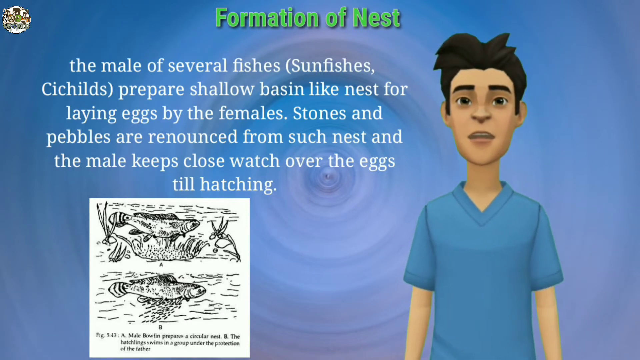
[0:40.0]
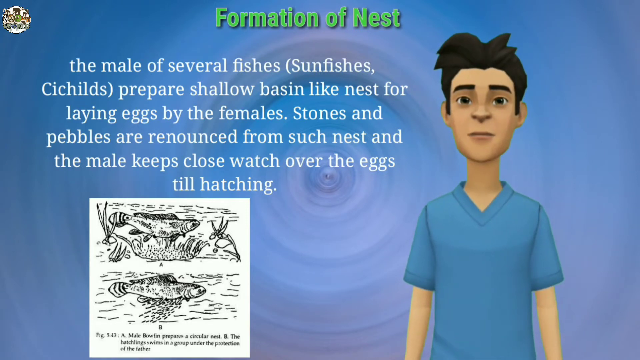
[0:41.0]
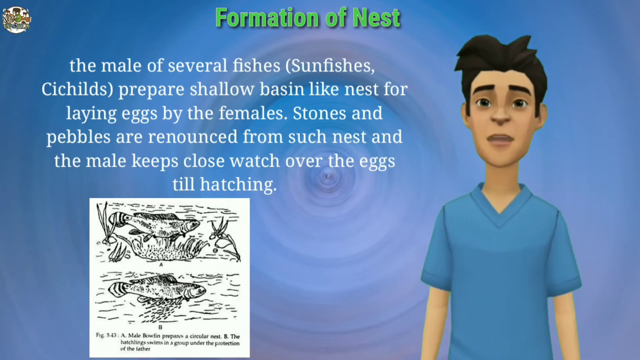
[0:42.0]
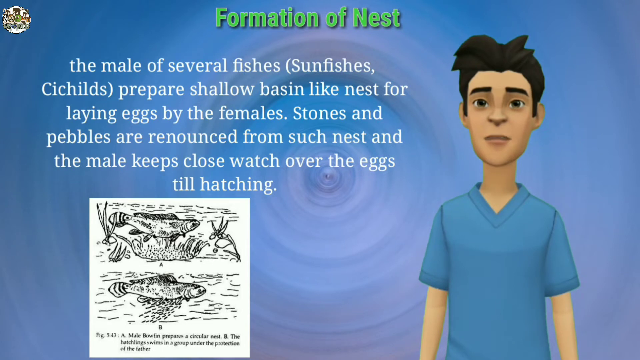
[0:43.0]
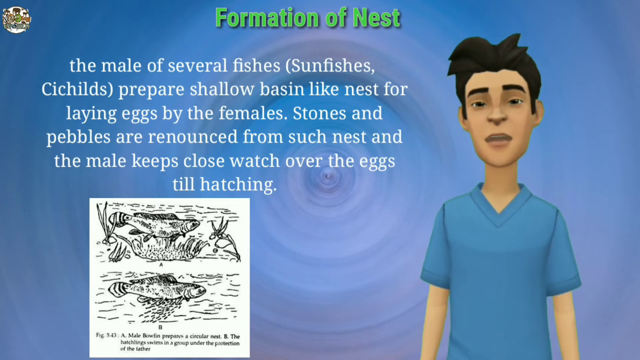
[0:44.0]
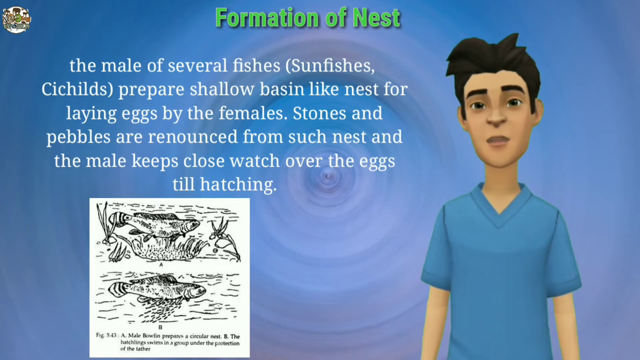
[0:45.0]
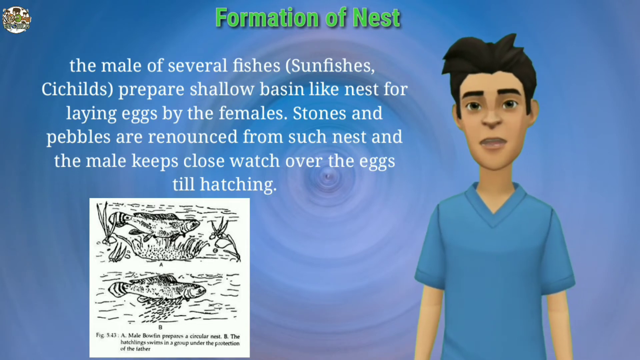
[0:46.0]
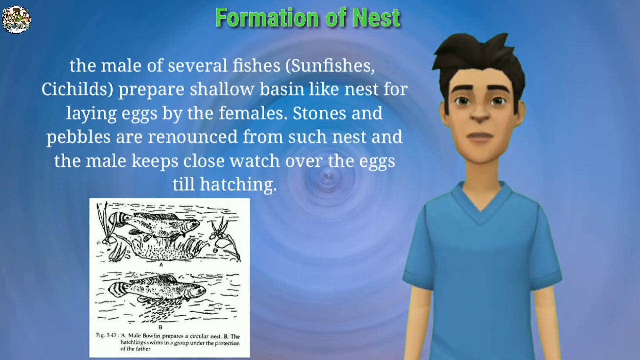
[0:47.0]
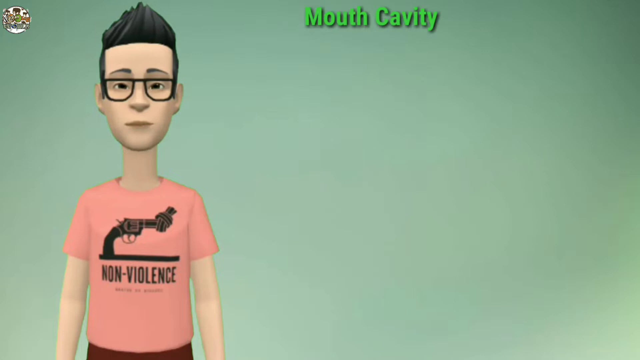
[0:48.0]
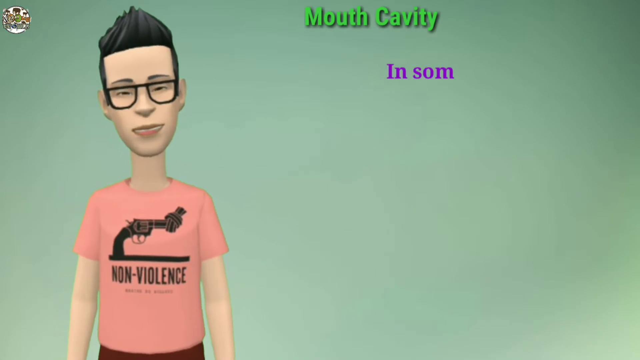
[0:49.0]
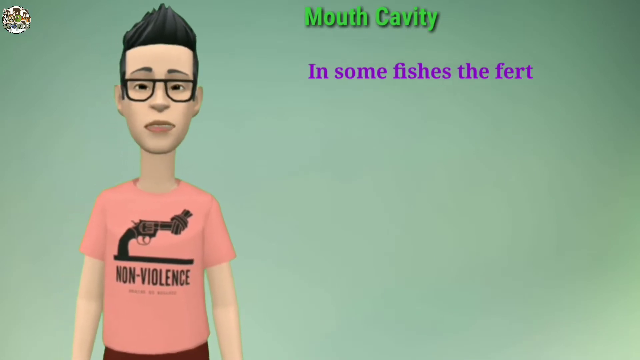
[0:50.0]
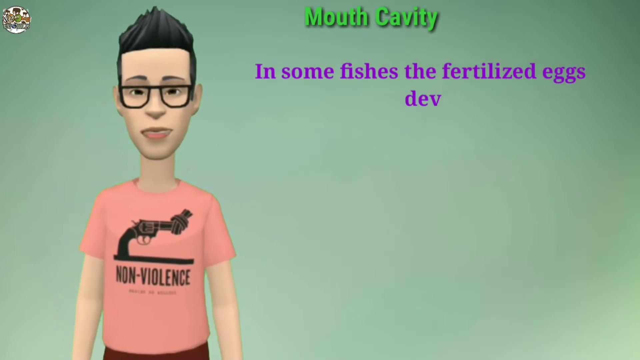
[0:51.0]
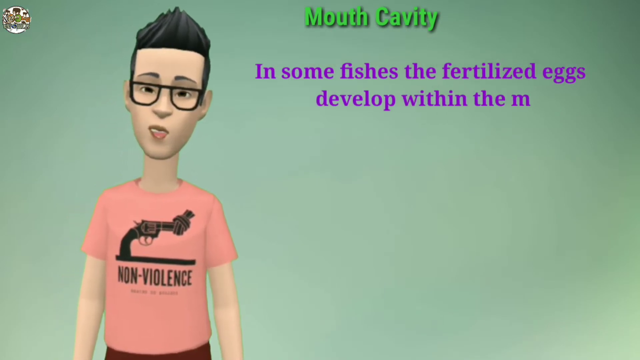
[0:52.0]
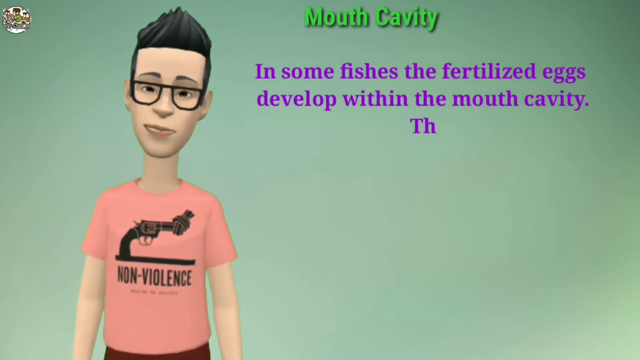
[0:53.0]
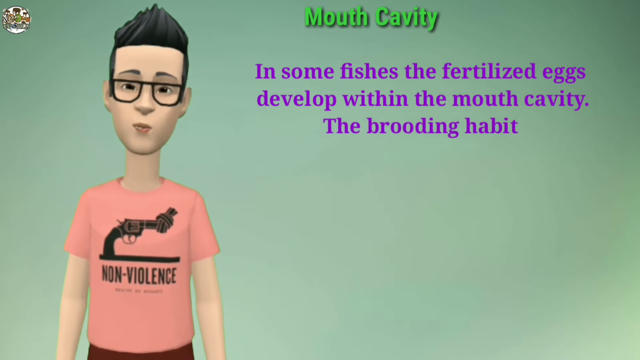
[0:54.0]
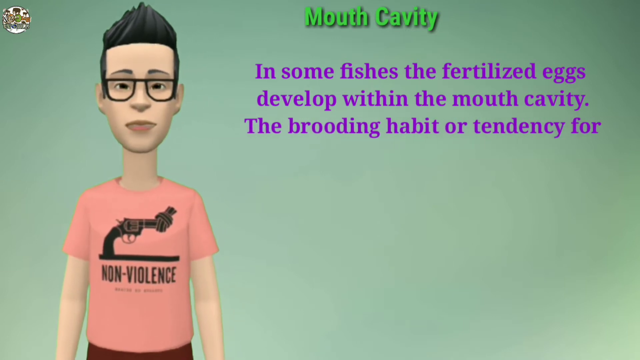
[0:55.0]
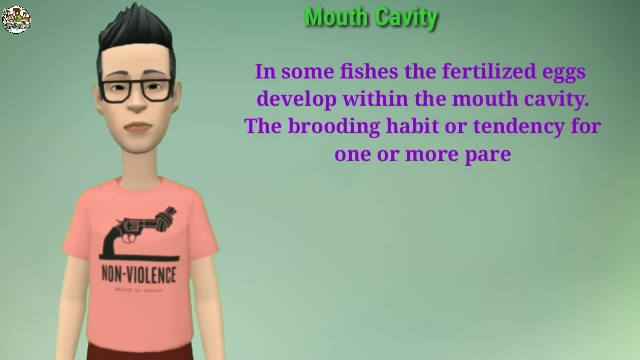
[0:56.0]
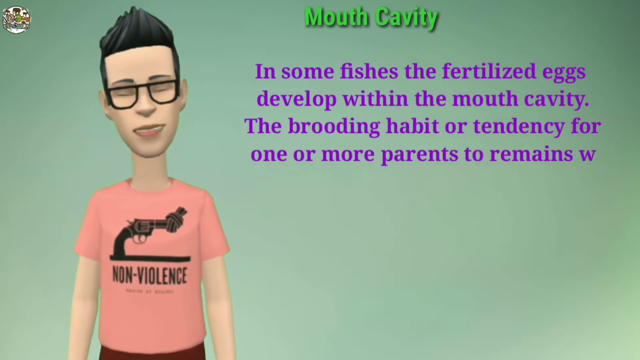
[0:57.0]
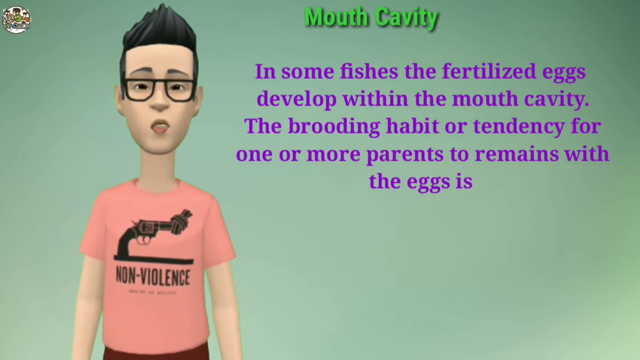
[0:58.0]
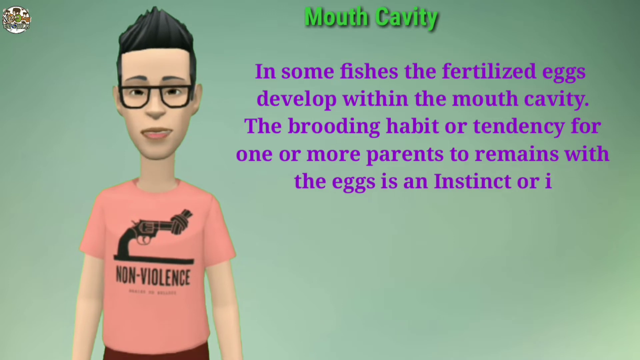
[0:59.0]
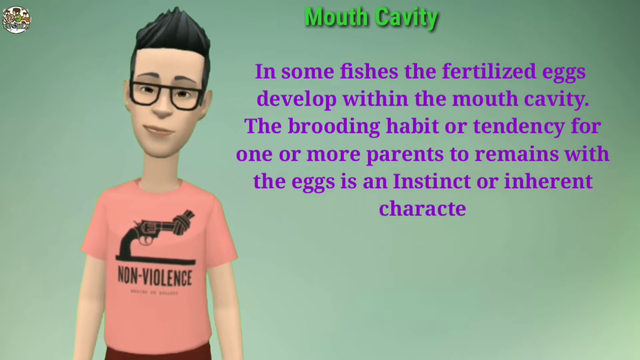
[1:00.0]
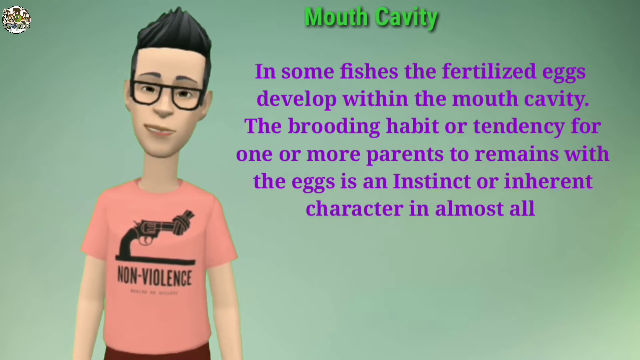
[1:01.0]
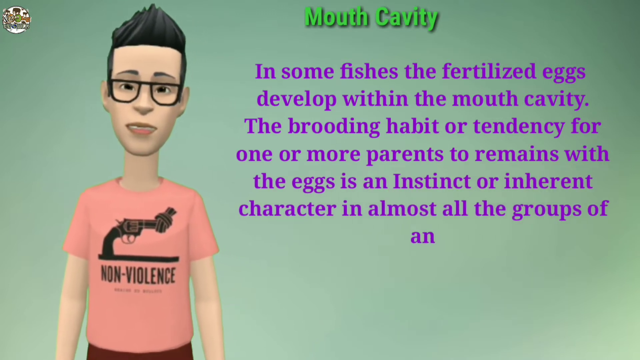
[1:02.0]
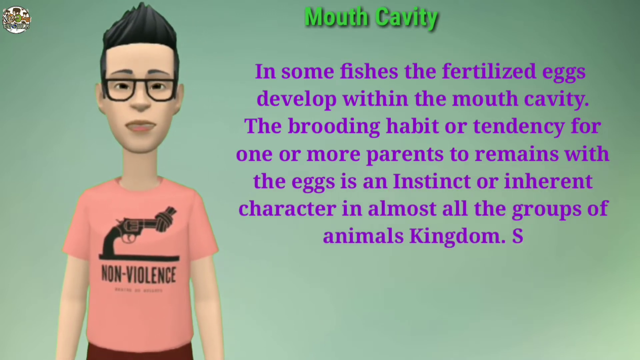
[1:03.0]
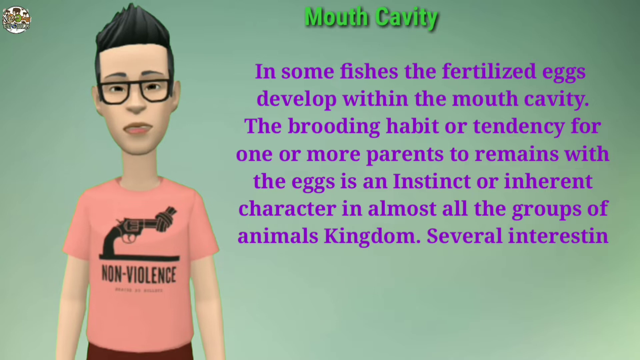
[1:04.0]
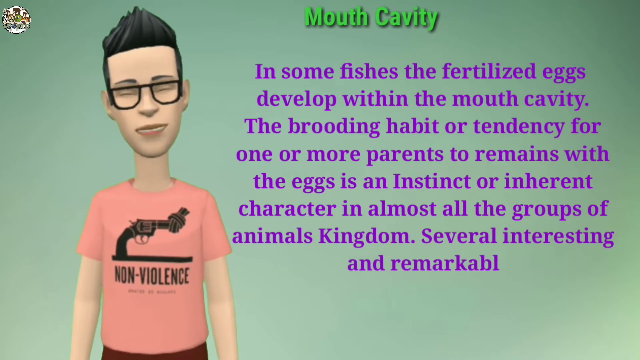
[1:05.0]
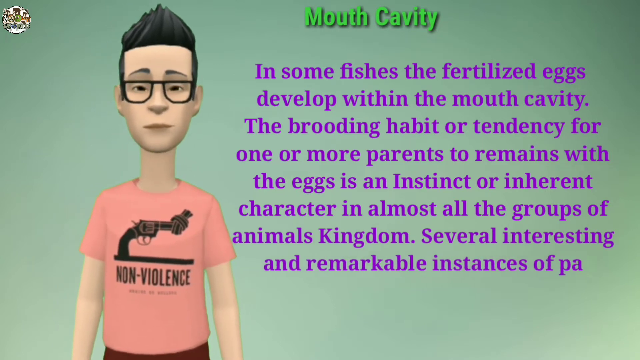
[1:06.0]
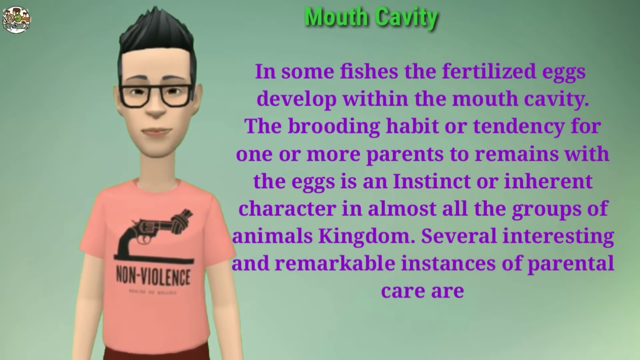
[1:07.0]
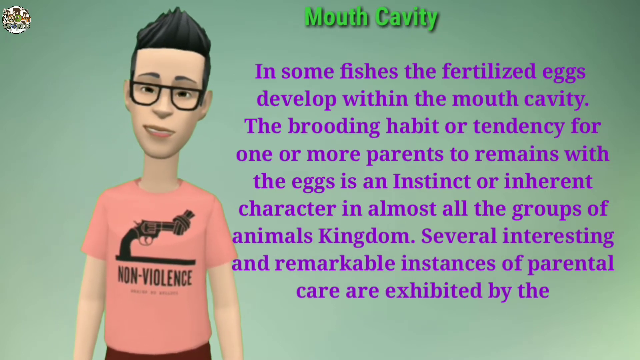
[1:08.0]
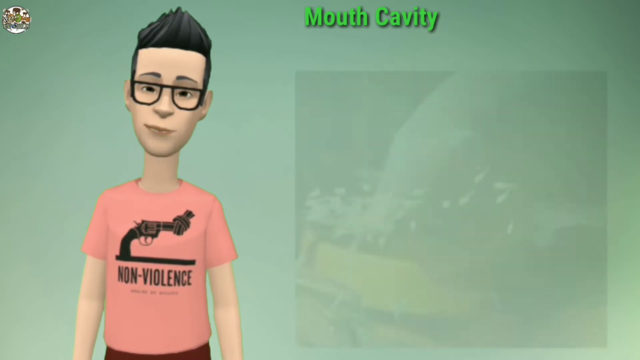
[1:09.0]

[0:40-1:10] A stylish, clean-cut man appears to explain the formation of the nest, and there is a kind of written visual of how it works. He bounces around against a blue background, his mouth moving, and the topic moves to the mouth cavity. He wears a pink shirt with a non-violence gun on it.